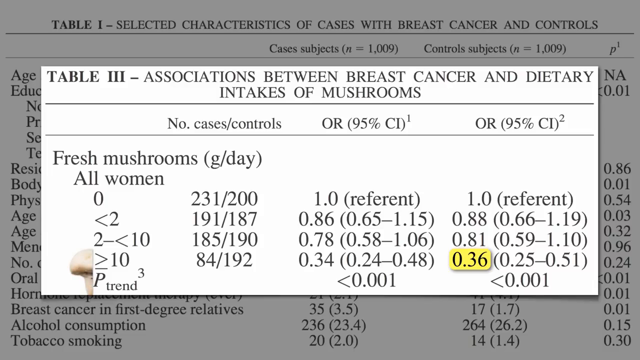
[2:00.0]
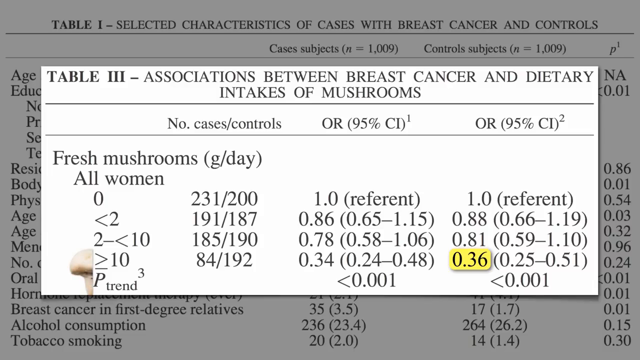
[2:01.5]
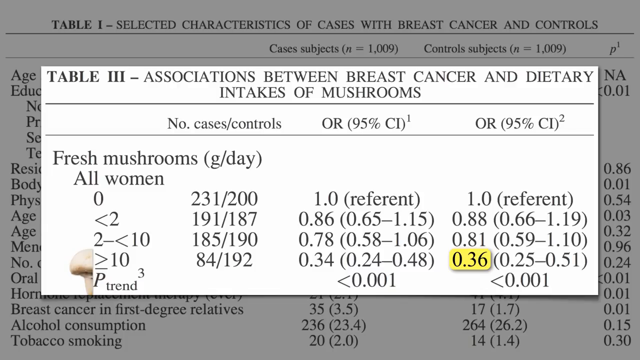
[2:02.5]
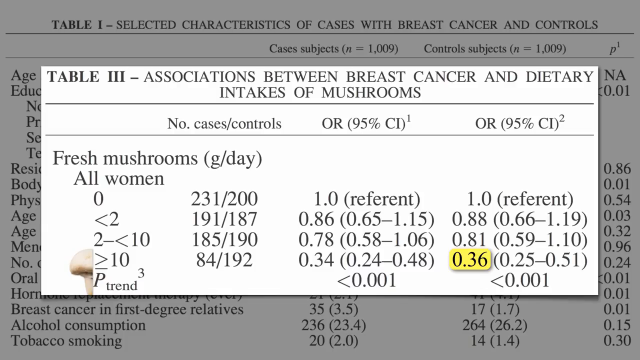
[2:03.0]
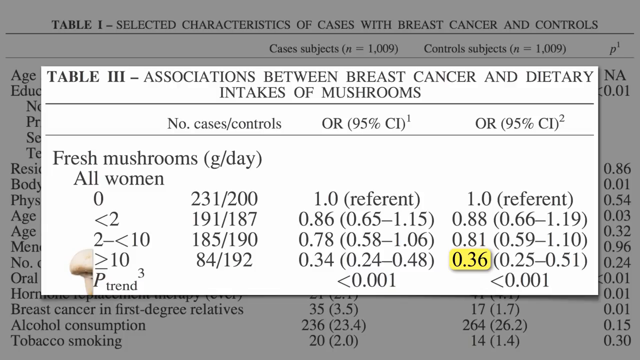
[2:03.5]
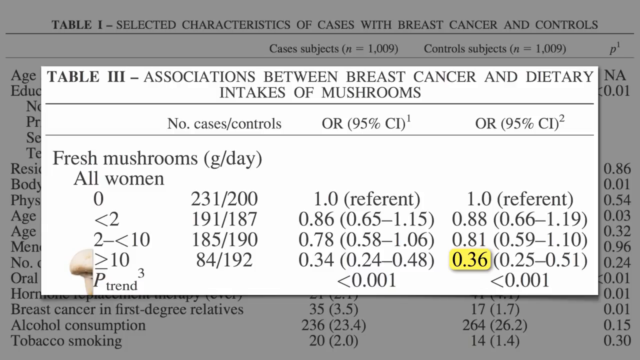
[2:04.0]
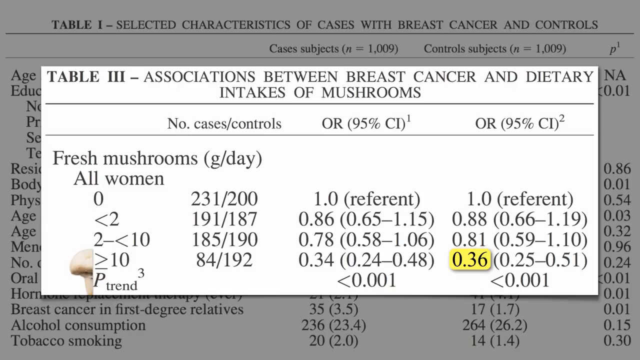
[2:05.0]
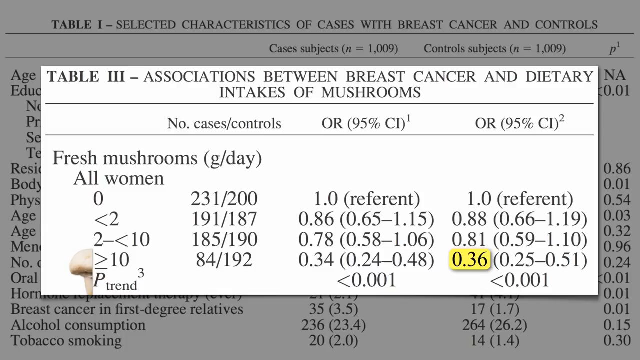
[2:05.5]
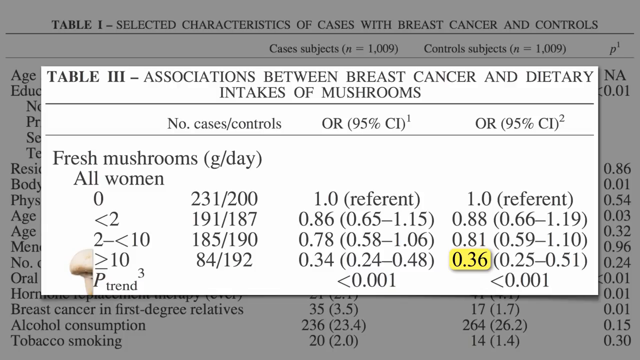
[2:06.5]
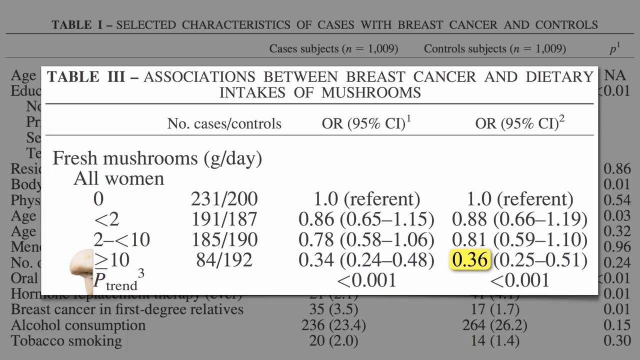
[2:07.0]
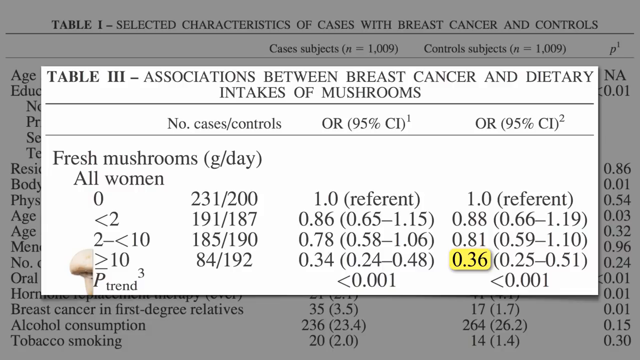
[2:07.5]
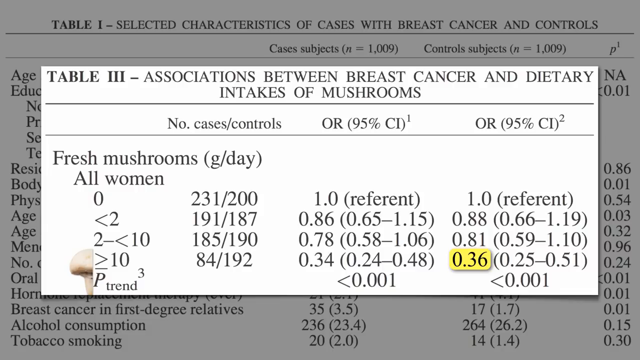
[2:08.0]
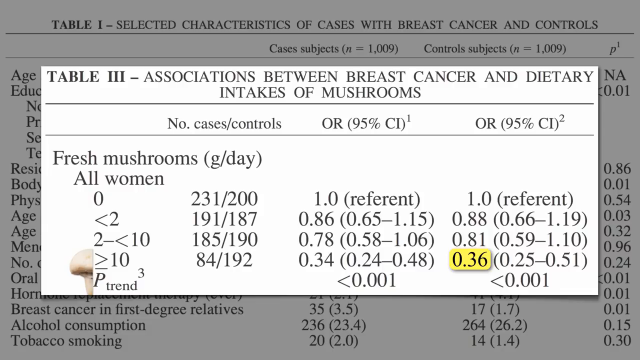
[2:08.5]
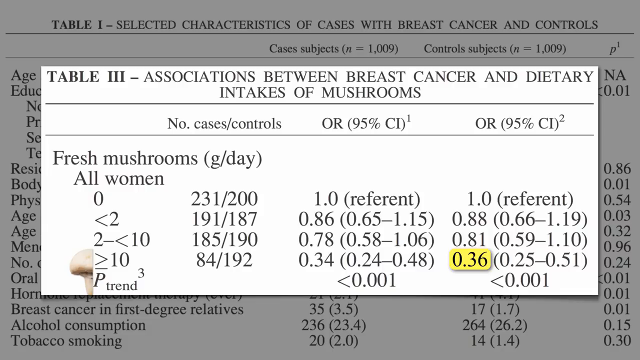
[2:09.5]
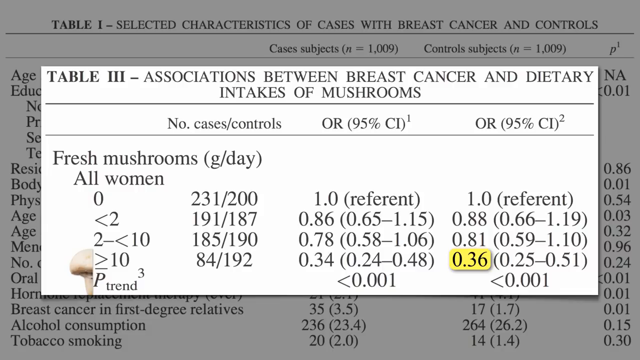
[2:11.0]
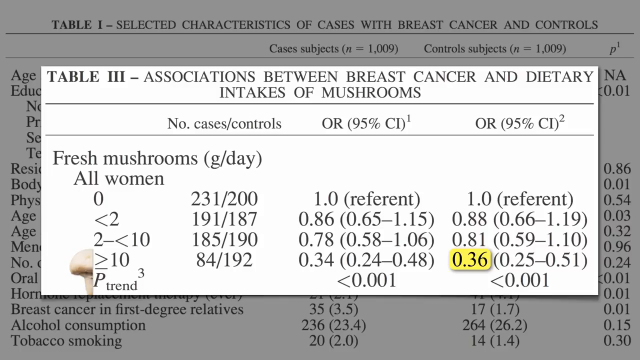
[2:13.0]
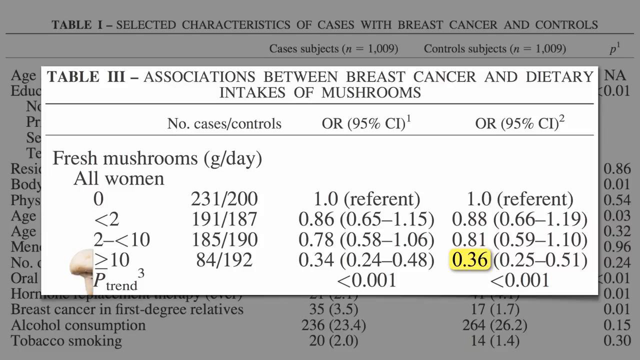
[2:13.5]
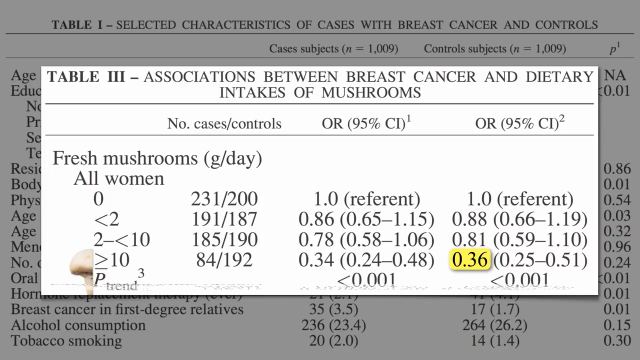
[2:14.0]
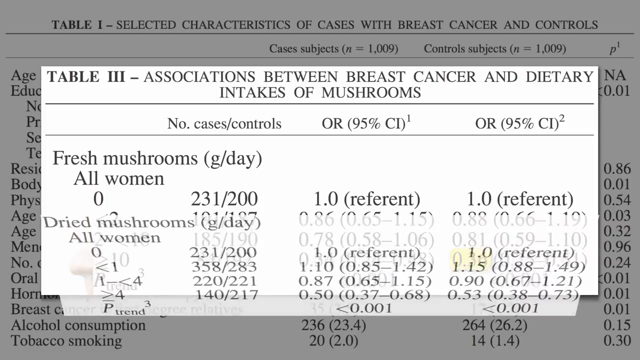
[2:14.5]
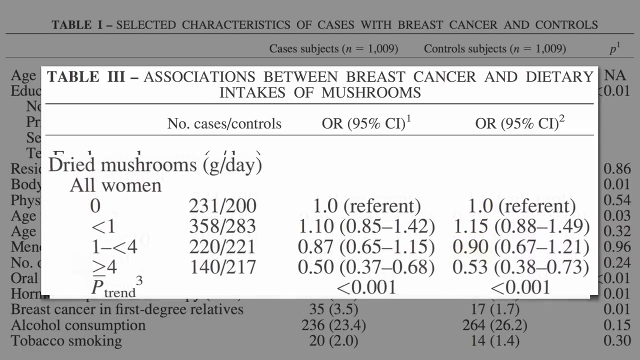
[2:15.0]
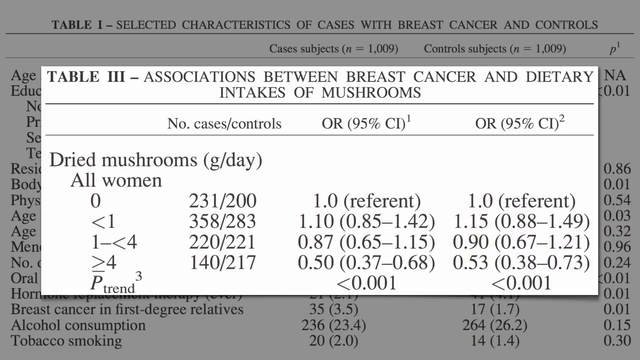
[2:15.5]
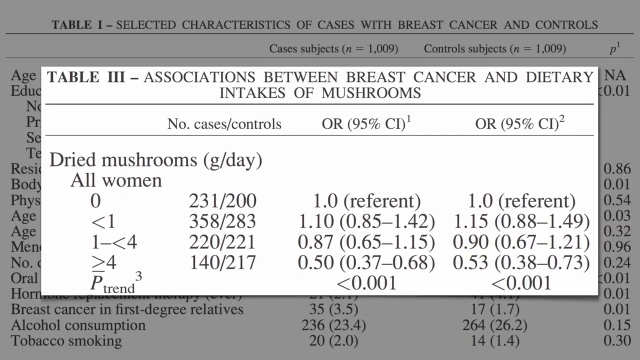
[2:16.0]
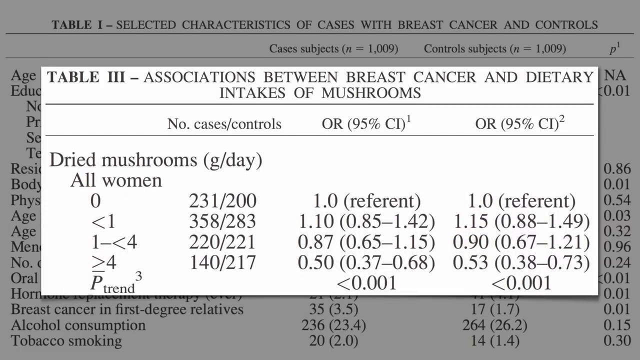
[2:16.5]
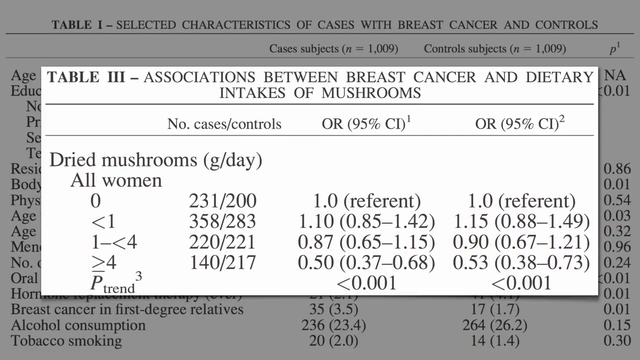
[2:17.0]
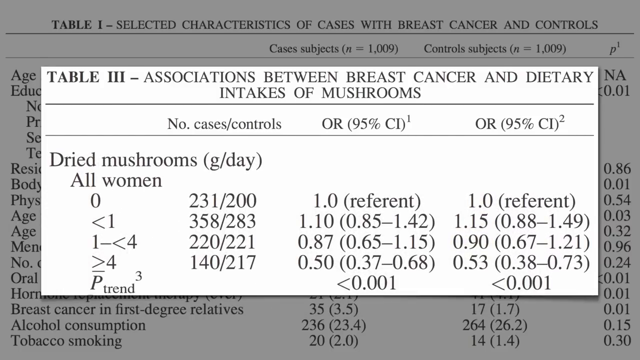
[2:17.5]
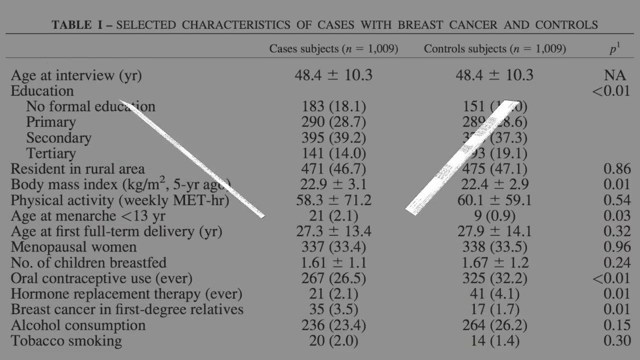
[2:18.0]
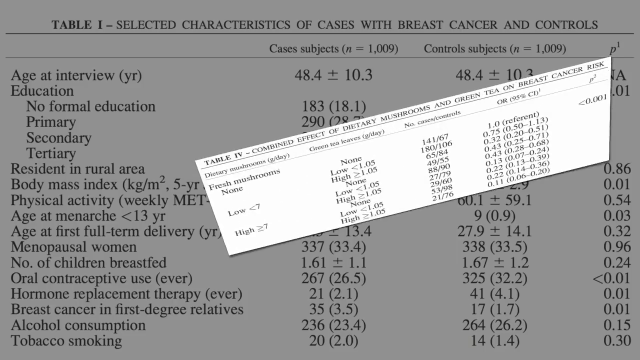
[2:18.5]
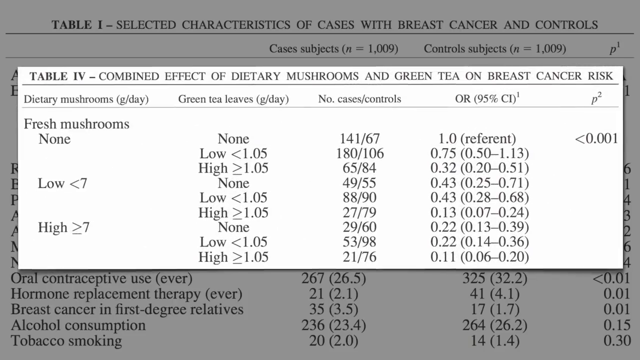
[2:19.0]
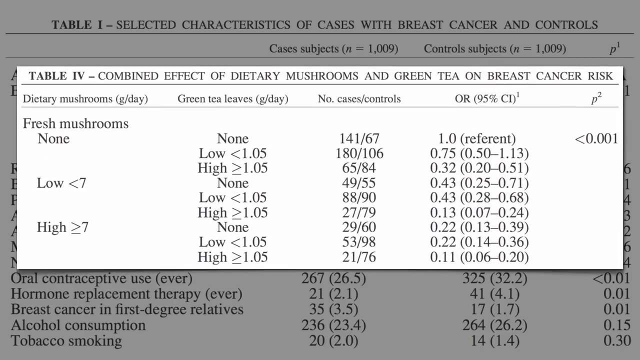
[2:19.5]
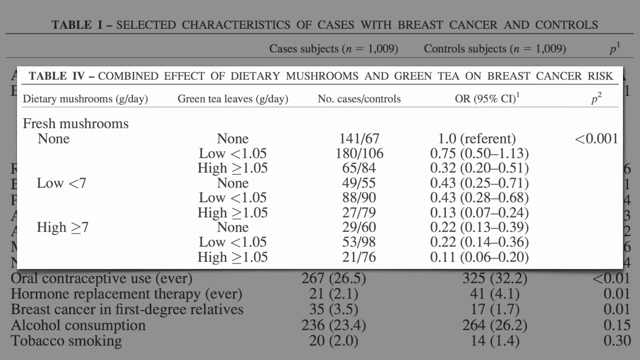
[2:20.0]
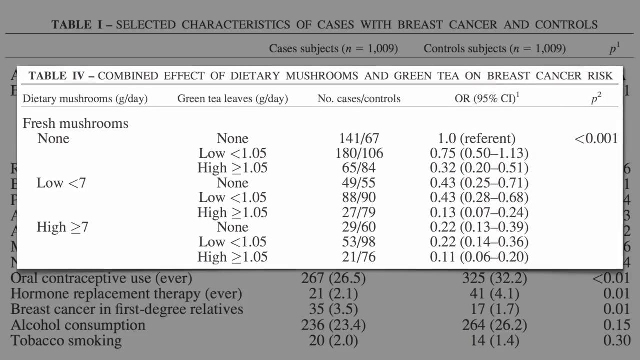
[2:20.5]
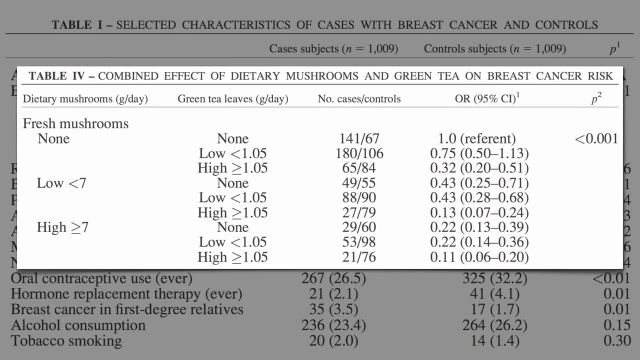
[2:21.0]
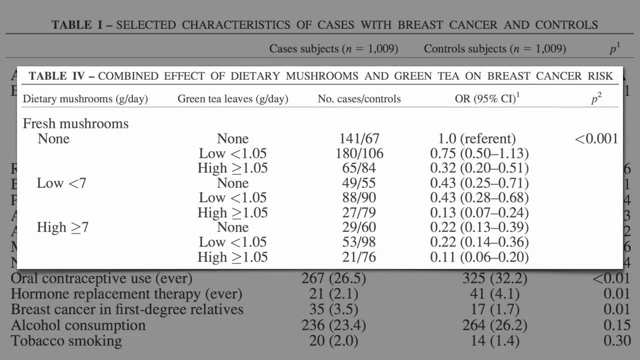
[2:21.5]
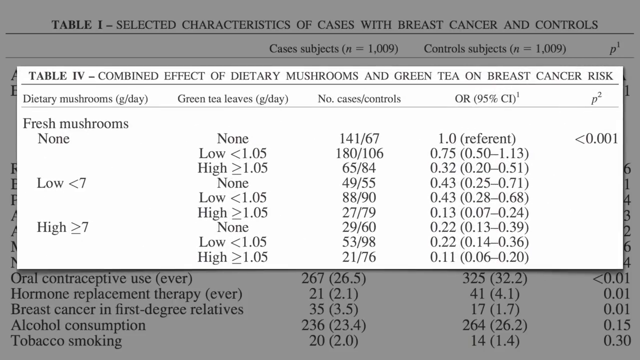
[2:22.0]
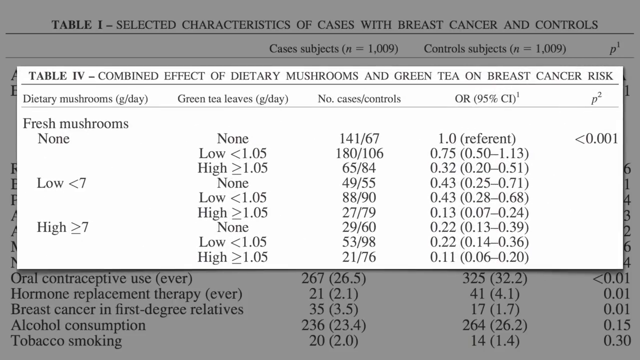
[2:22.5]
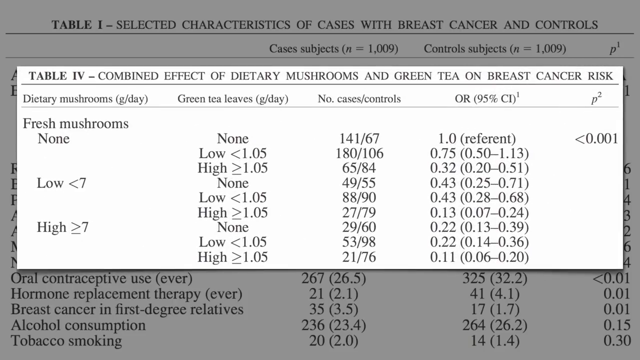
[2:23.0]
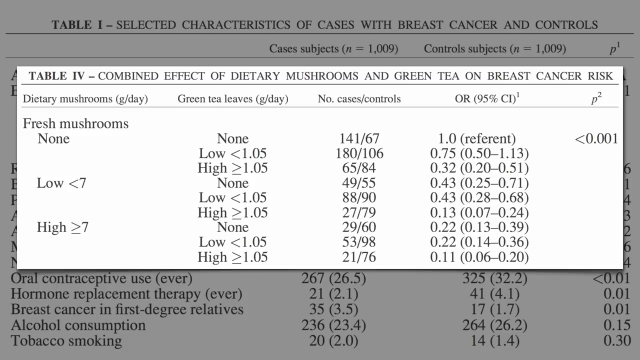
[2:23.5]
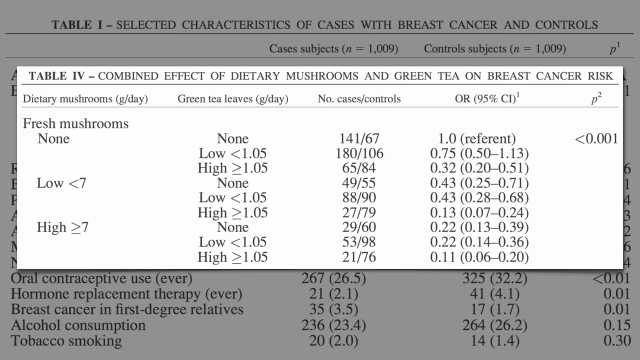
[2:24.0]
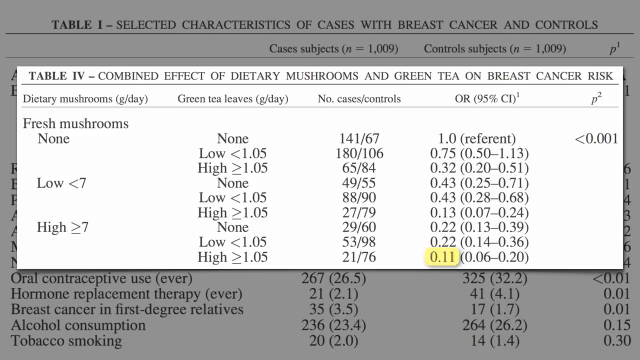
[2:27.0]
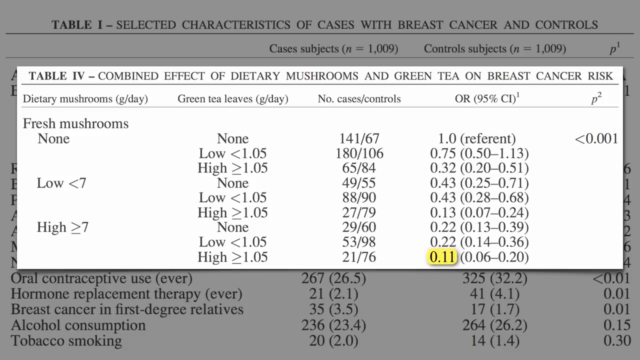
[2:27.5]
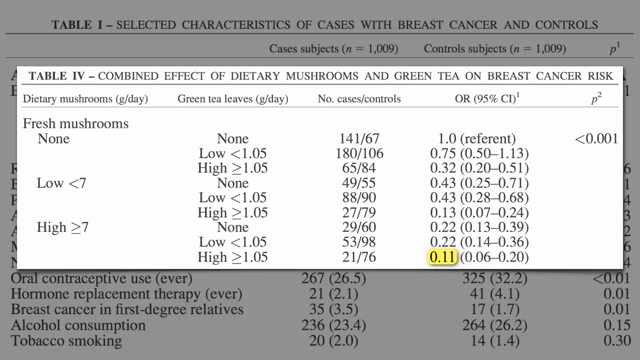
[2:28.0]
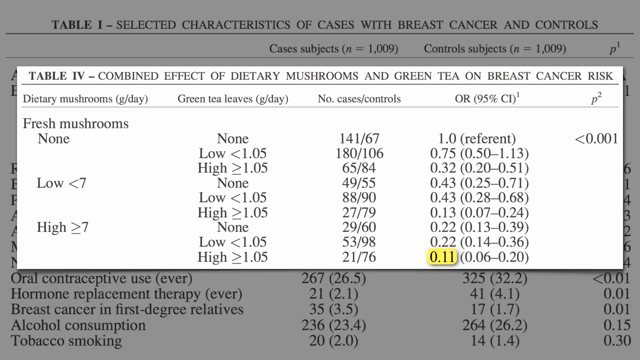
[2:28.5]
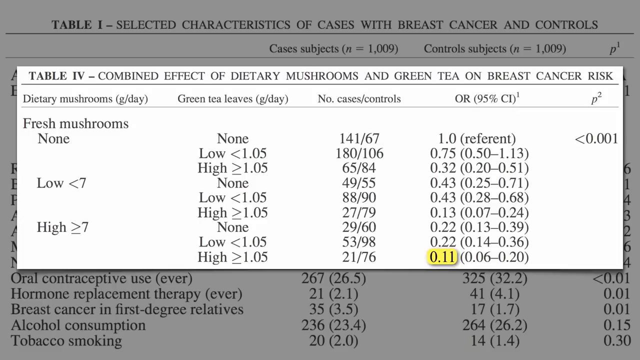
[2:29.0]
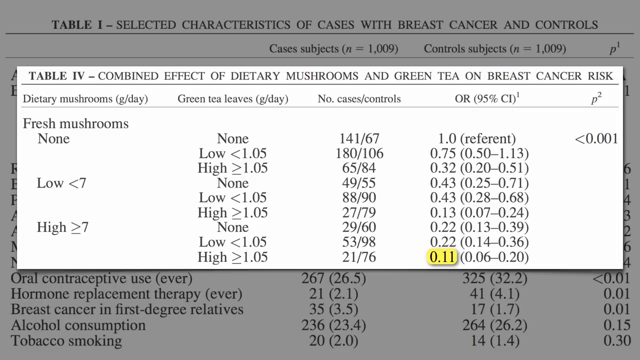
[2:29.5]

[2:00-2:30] The white background shows Table 1 in black text, overlapped in the middle of the screen by Table 3 in a brighter white rectangle with black text saying "associations between breast cancer and dietary intakes of mushrooms", with the corresponding columns and values, a partial picture of a nose in the bottom left corner, and a highlighted value of 0.36 in the bottom right corner. After around 12 seconds, a partial transition from the bottom of Table 3 overlaps and replaces the contents of the table with different labels saying "dried mushrooms", showing the values for all women and the different numbers in each column. In a quick transition, the whole Table 3 box minimizes and moves off to the left, then moves back to the right as it minimizes and fades away. At the same time, Table 4 enlarges from the middle right-hand side of the screen and covers most of the Table 1 screen. It is labeled "table 4, combined effect of dietary mushroom and green tea on breast cancer risk", with a column for mushrooms, low high, then green tea leaves in grams per day, the cases/controls, and the corresponding values. The very bottom number in the fourth column of the table, 0.11, is highlighted in yellow.